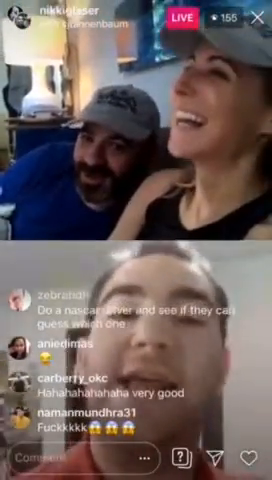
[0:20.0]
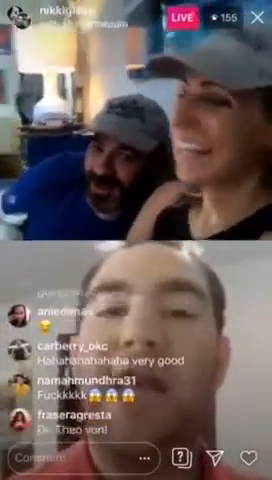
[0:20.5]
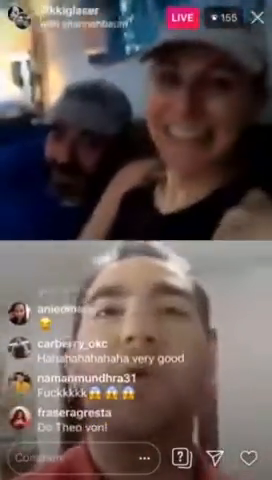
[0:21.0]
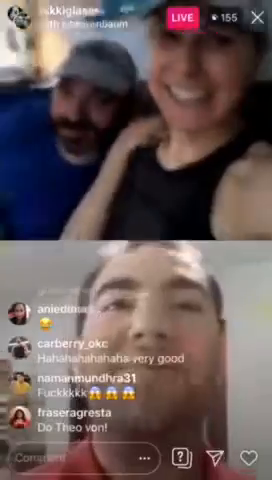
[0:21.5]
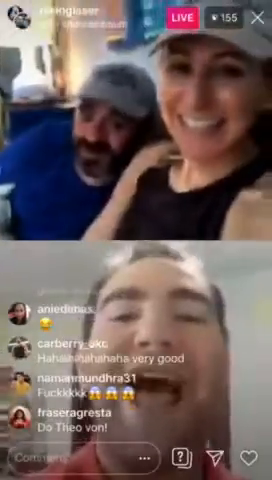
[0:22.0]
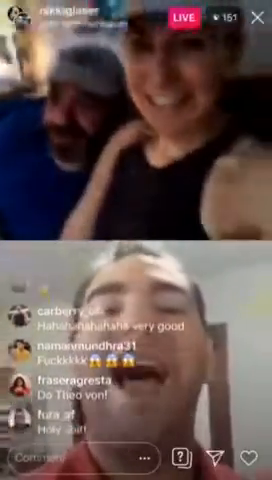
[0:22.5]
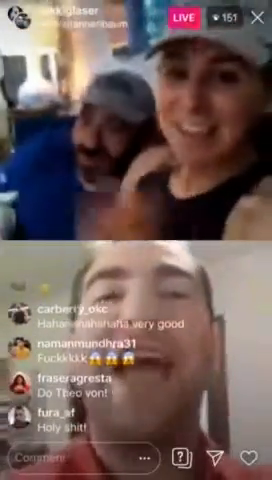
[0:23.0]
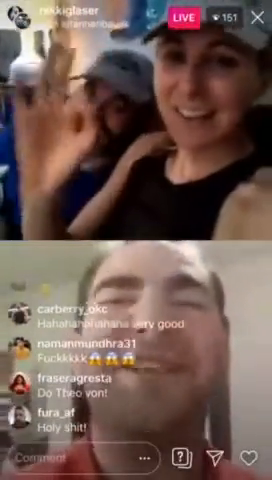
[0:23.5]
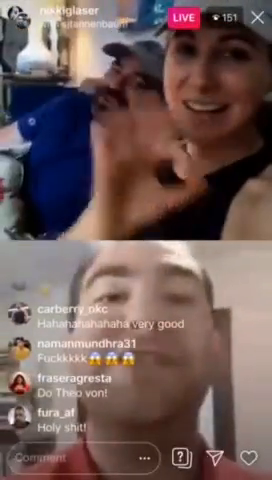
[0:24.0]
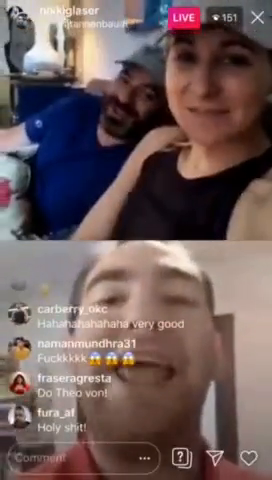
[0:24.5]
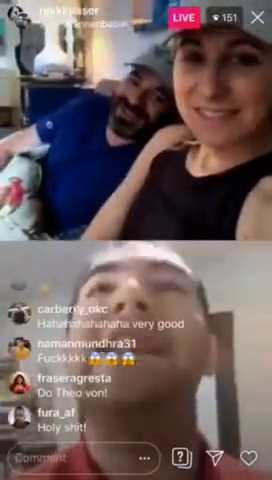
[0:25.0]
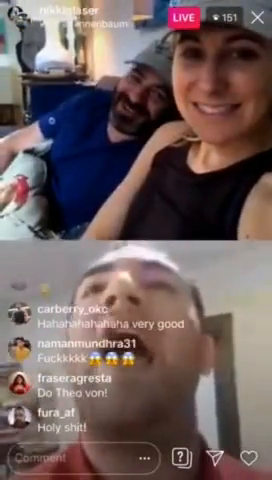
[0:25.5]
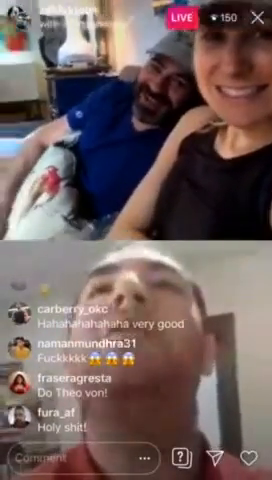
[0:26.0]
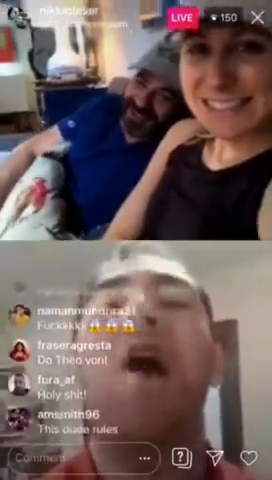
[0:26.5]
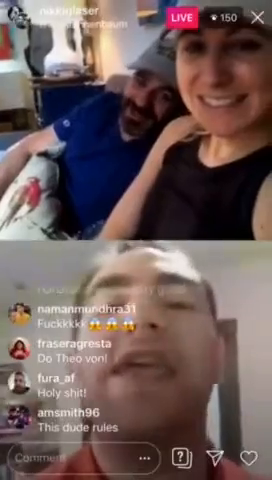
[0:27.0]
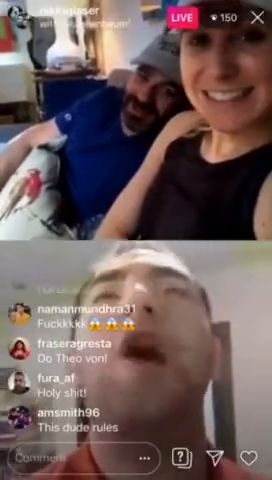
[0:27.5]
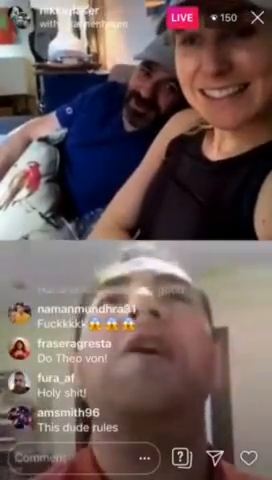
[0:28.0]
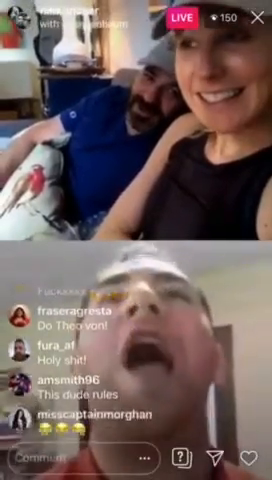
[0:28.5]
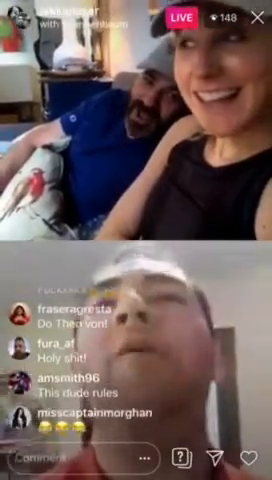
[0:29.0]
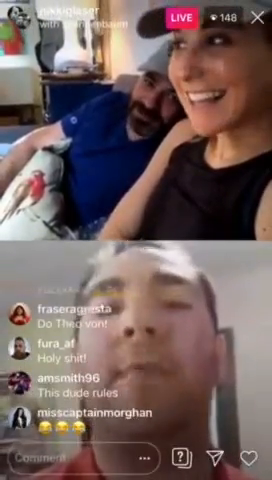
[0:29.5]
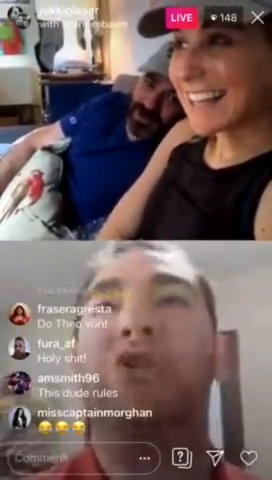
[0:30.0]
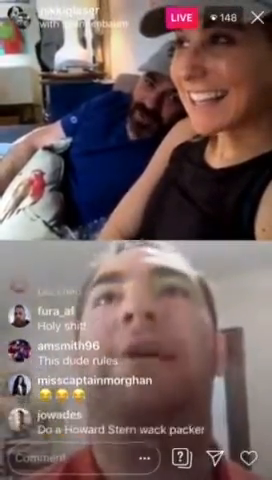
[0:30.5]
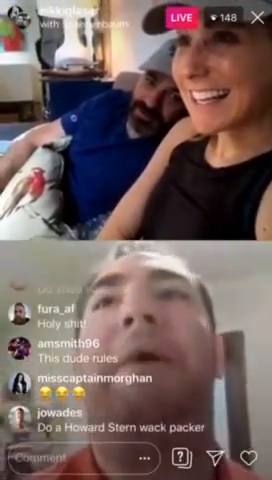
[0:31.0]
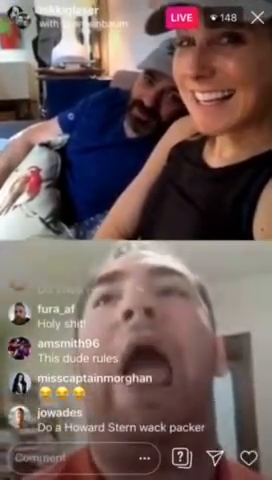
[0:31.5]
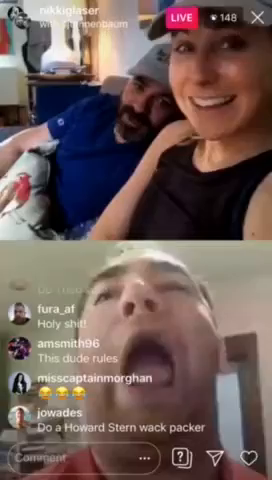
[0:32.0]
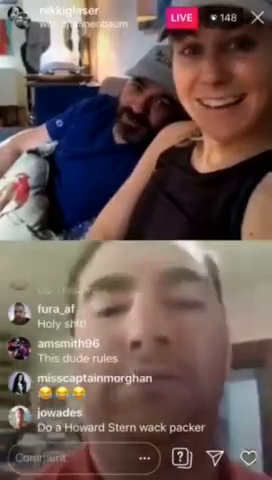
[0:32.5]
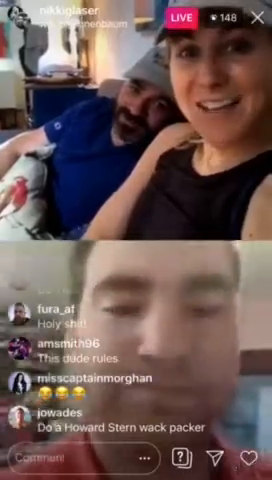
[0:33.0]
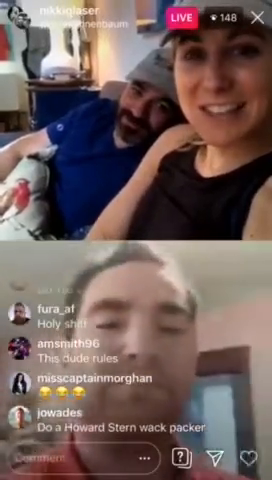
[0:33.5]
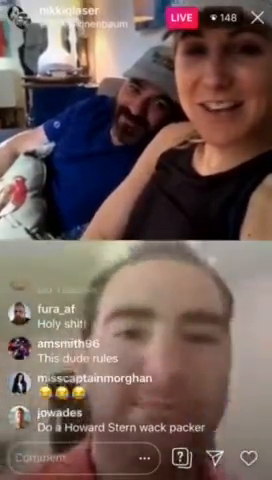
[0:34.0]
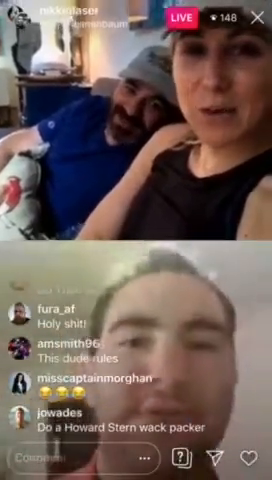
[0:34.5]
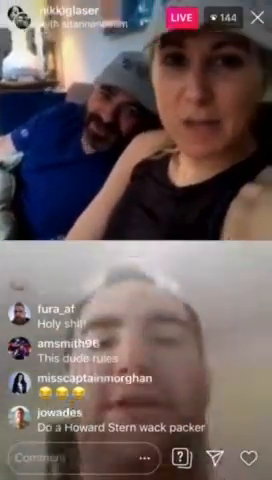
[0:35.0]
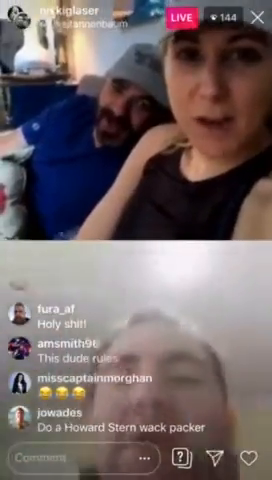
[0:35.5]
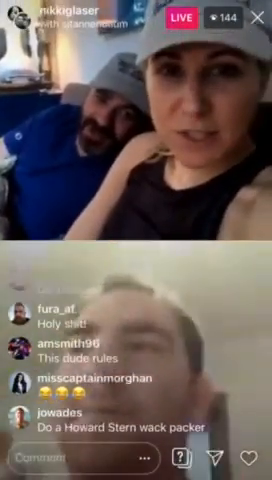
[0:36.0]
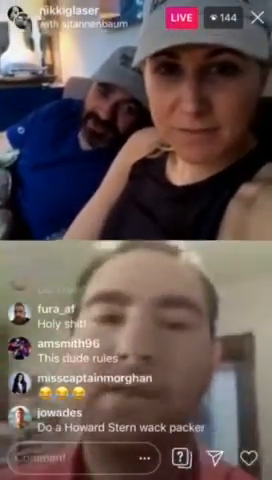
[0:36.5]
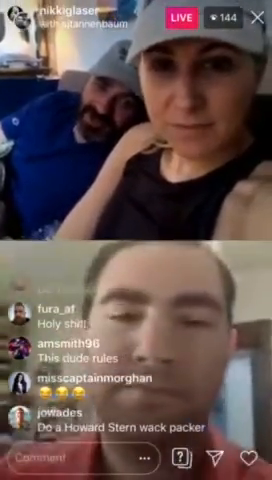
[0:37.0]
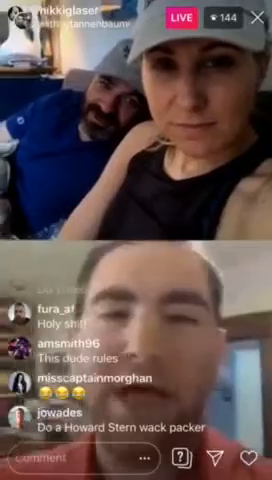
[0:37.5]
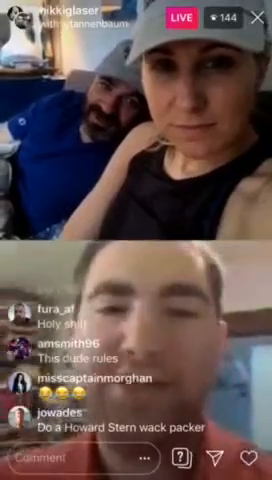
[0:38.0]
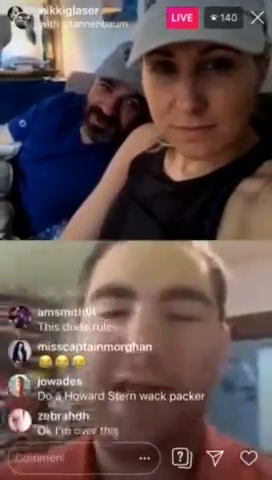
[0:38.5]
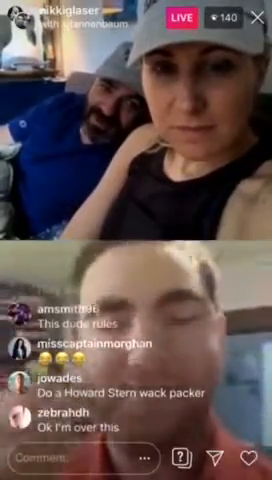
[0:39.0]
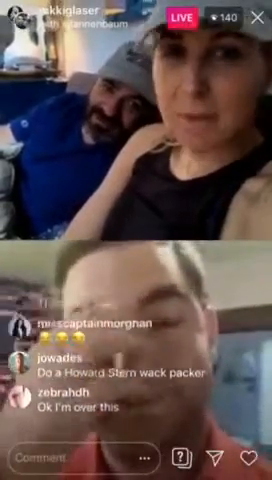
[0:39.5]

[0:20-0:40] The live stream is divided in half, top and bottom. Several icons run along the bottom, one of which is an empty text box, and above them profile icons, names and chat messages scroll up. The top edge has several icons indicating a viewer count, that the video is live, and that the stream is Nikki Glaser's. In the bottom half, a man speaks to the camera. In the top half, a man and a woman sit on a couch, the man leaning closer to the woman while she smiles. The woman rotates their camera a bit, revealing a desk with a computer behind them. The man in the bottom appears to be speaking loudly and energetically. The woman starts speaking to the camera, and the man beside her says something as well. The man in the bottom speaks back as he rubs his eye with his finger.